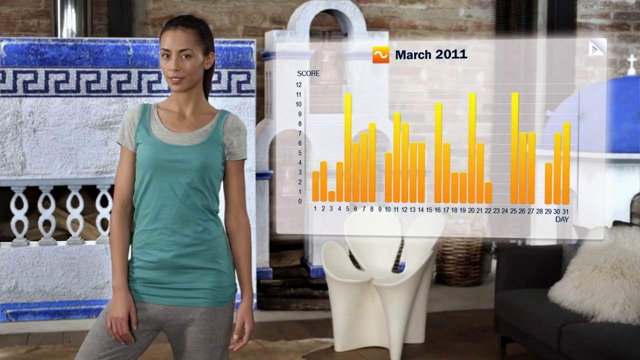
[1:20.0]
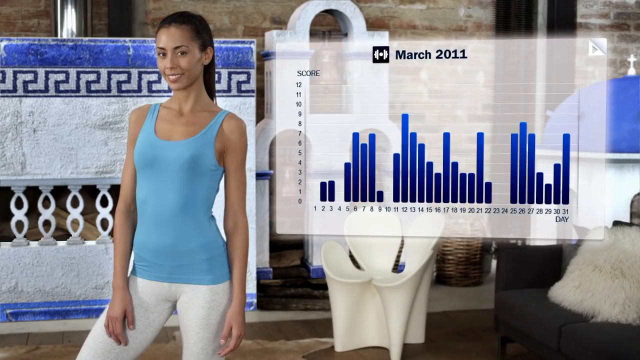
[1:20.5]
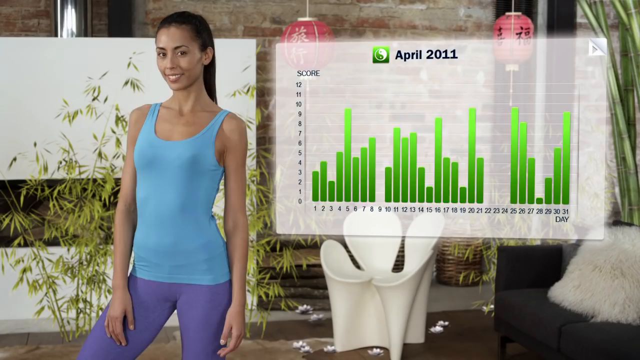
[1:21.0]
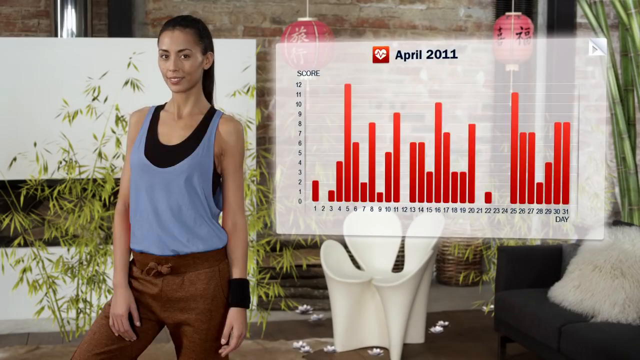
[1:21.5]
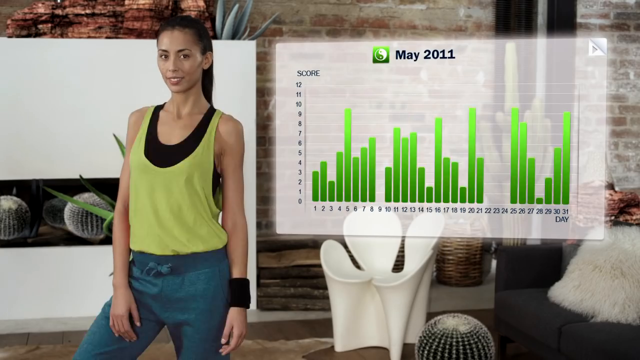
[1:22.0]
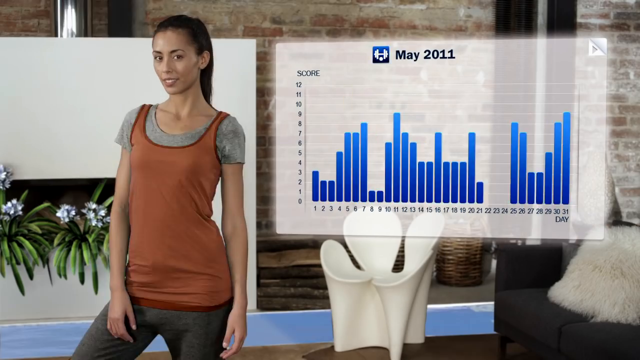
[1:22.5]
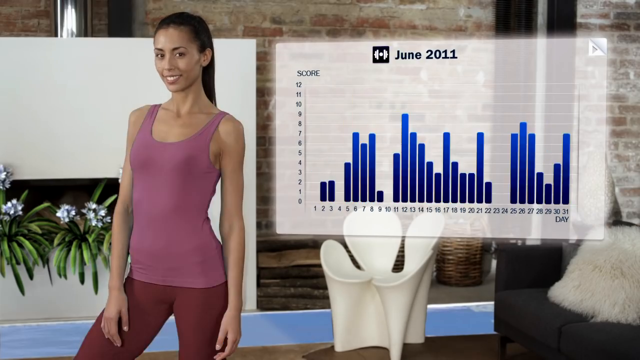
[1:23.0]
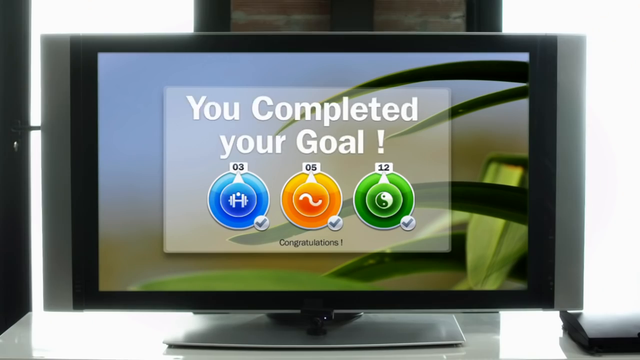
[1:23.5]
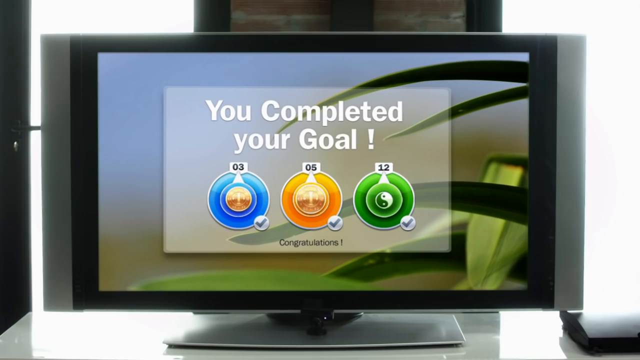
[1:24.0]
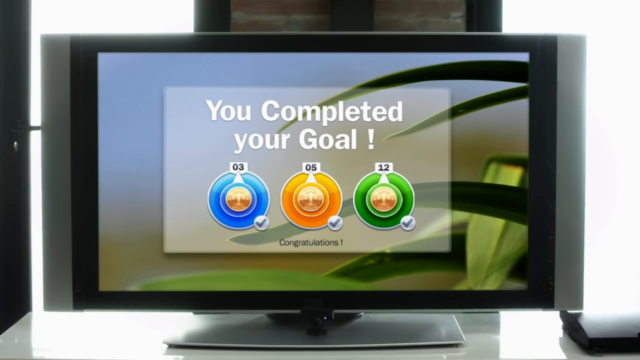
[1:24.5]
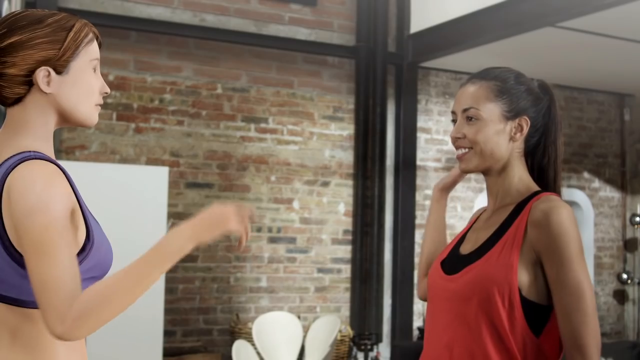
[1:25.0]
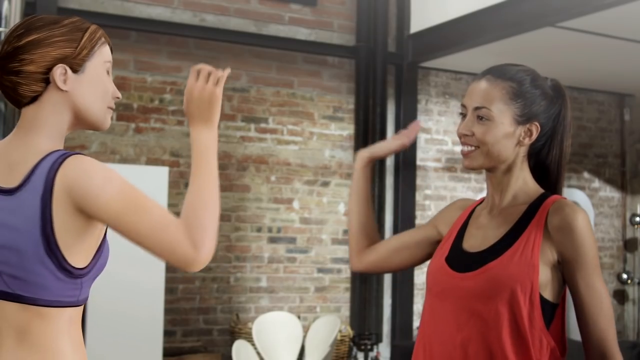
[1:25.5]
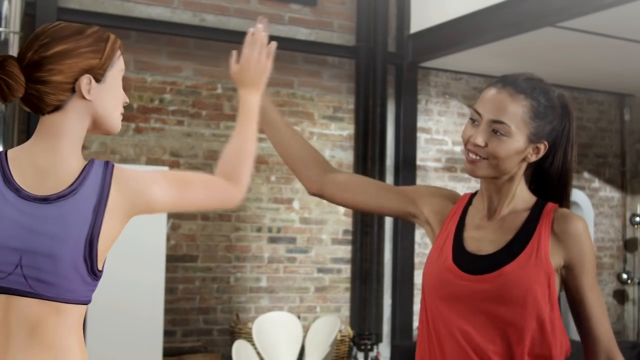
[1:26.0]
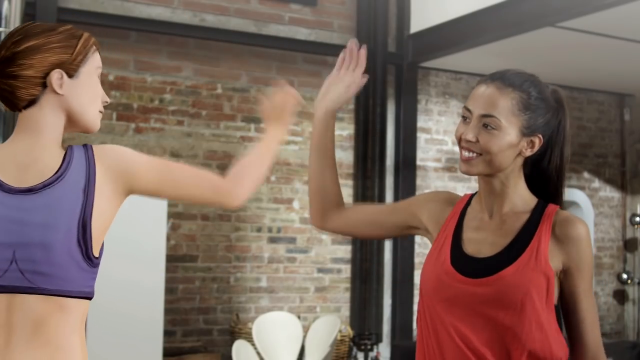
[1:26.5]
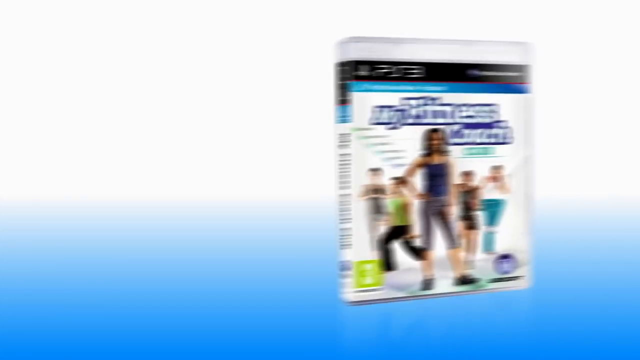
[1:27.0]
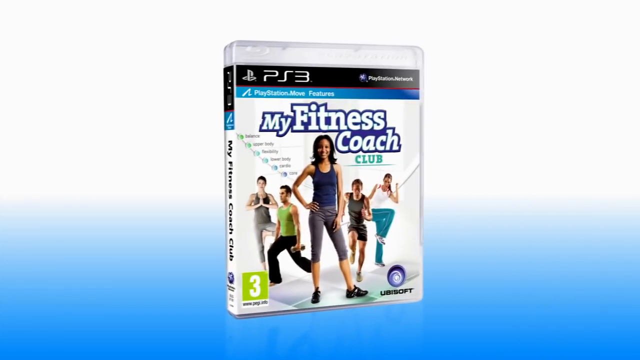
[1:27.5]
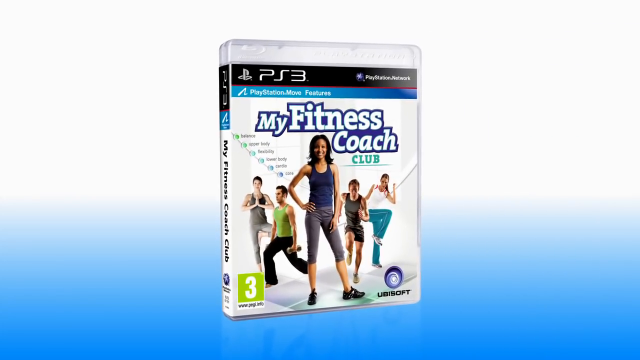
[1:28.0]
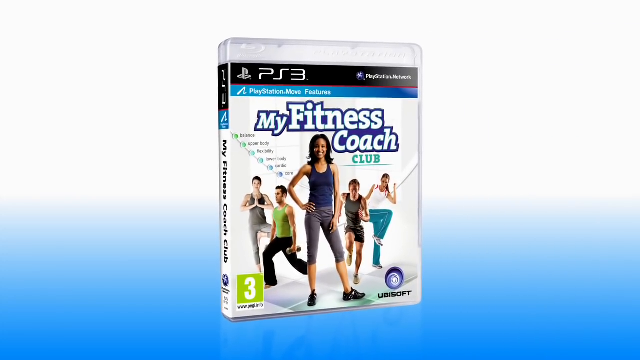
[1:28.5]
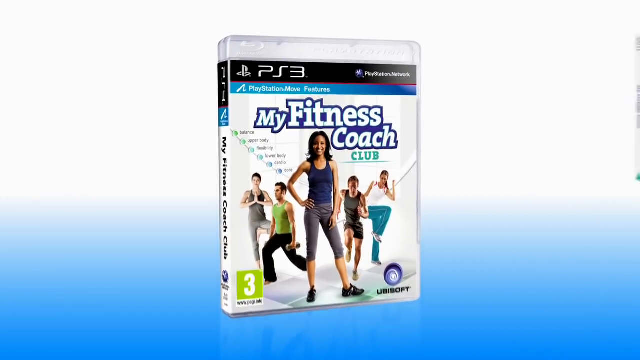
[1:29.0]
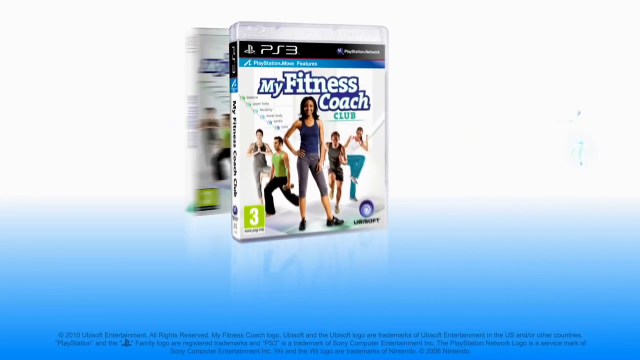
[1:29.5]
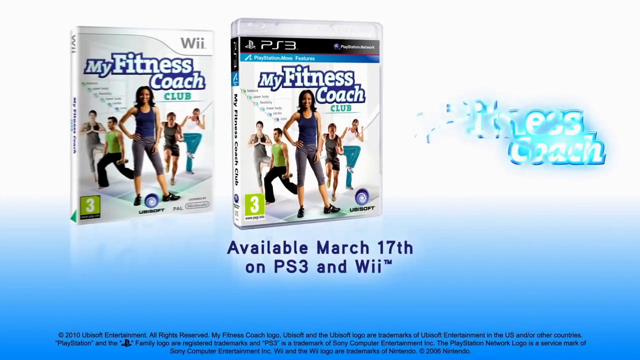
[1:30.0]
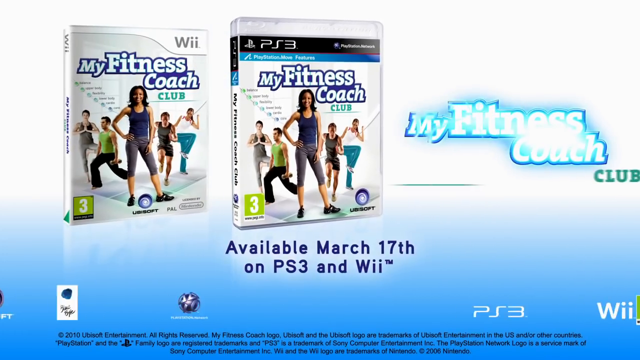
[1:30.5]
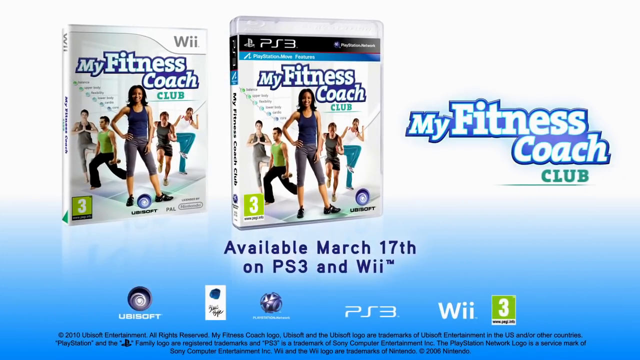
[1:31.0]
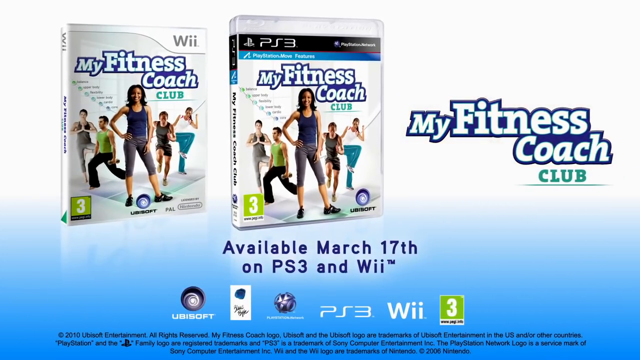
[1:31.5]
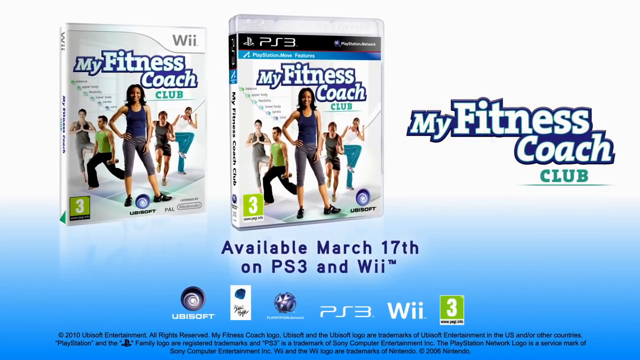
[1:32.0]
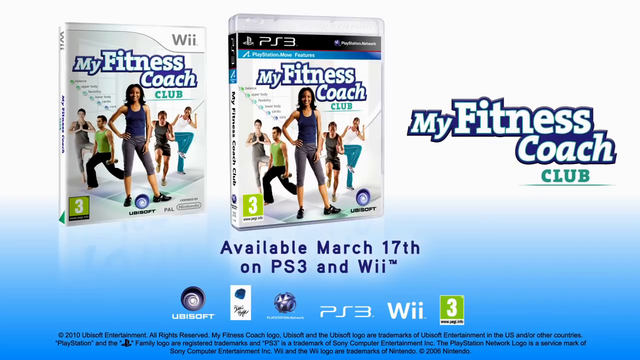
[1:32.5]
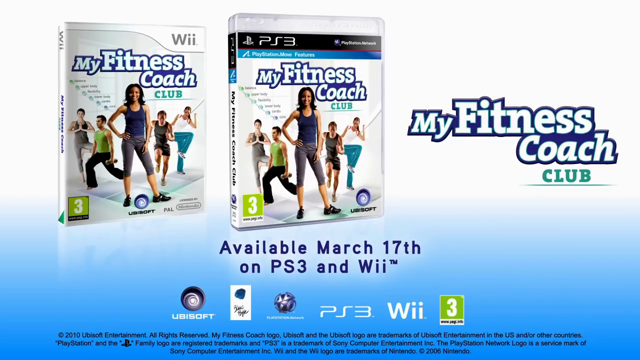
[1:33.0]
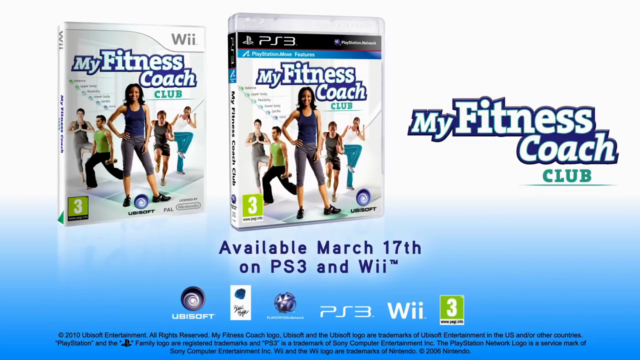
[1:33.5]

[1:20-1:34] A woman in exercise clothing has a chart floating next to her, a bar chart giving different scores for different exercise areas for each month. As it goes to different categories, the chart changes colors along with the woman's outfit. At first the chart has a green yin yang icon with green bars and says "March 2011", and the woman wears a pink tank top. The chart then changes to a yellow icon with a white squiggly line inside for March 2011, the bars turn yellow, and the woman's shirt turns teal green. Next the chart's icon changes to a red box with a white heart with EKG lines going through it, the bars change to red, and her shirt changes to a brown shirt. Then the icon changes to a black box with a white dumbbell, the bars turn blue, and her tank top turns blue. This keeps changing for the months of March, April, May and June 2011. The scene changes to what looks like a large, wide desktop monitor with a picture of what looks kind of like an aloe vera plant on the background and a sort of transparent rectangular box that says "you completed your goal", with a blue circle with a number three on top, an orange circle with a number five on top, and a green circle with a number 12. What look like two women, one human and one virtual, give each other a high five in a living room with brown brick walls. The scene changes to a background that is sort of white on top and light blue on the bottom, showing a PS3 physical game box that says "my fitness coach", with a few images of people doing different exercises on the cover. On the left side another game box with the same front cover design is shown, this one for the Wii console. On the right side a logo comes up that says "my fitness coach club", and at the bottom of the screen it says "Available March 17th on PS3 and Wii".